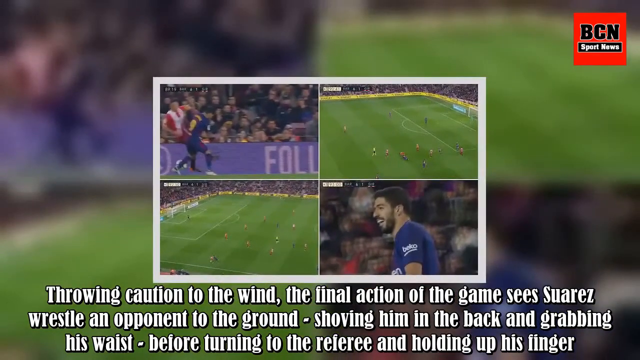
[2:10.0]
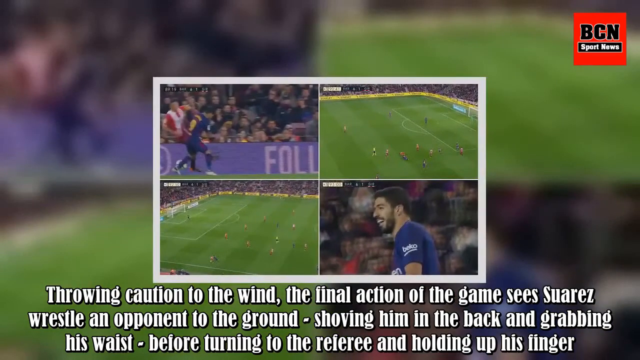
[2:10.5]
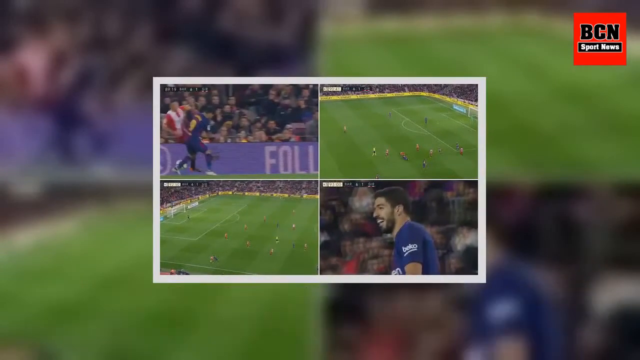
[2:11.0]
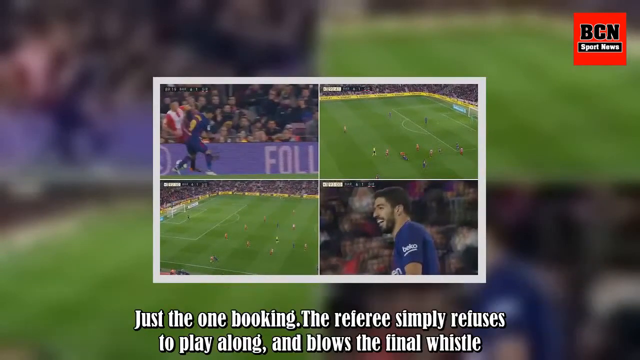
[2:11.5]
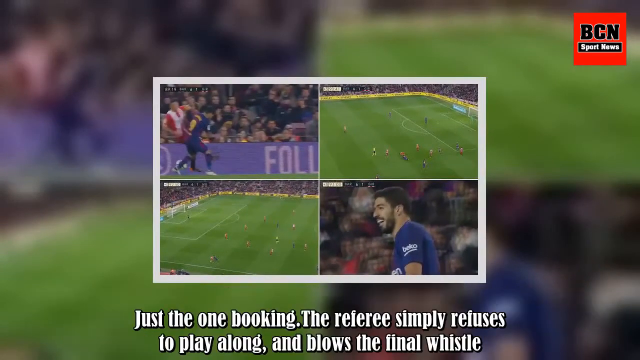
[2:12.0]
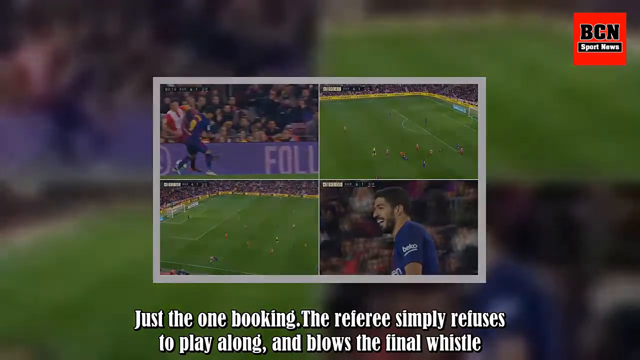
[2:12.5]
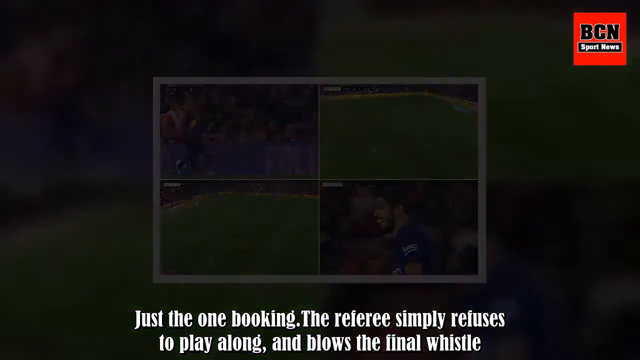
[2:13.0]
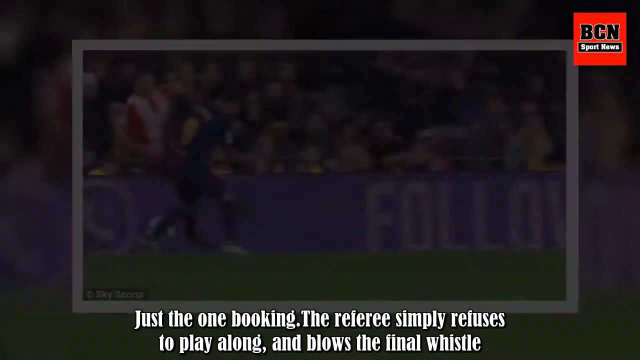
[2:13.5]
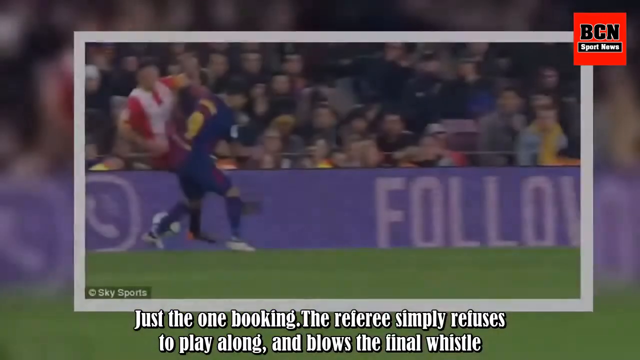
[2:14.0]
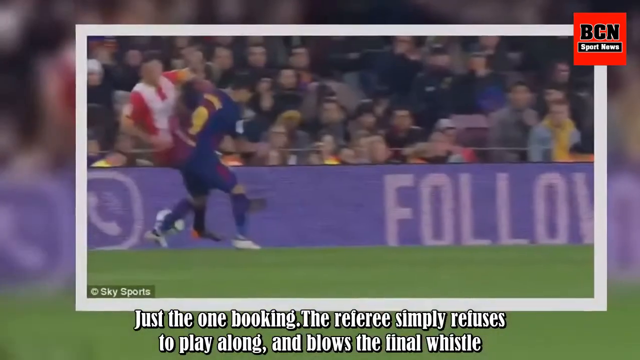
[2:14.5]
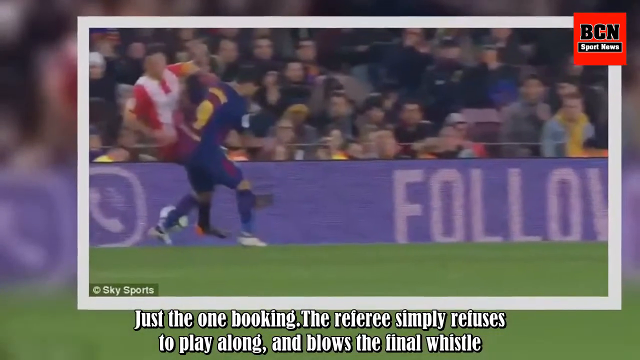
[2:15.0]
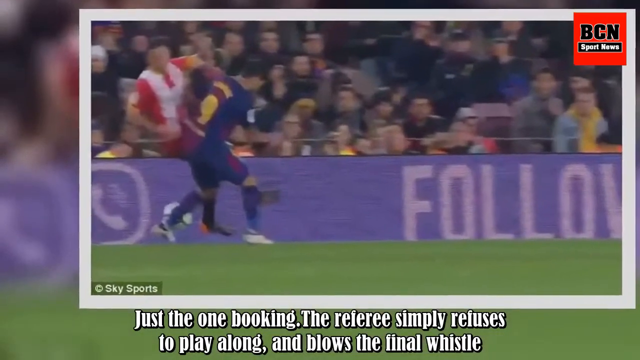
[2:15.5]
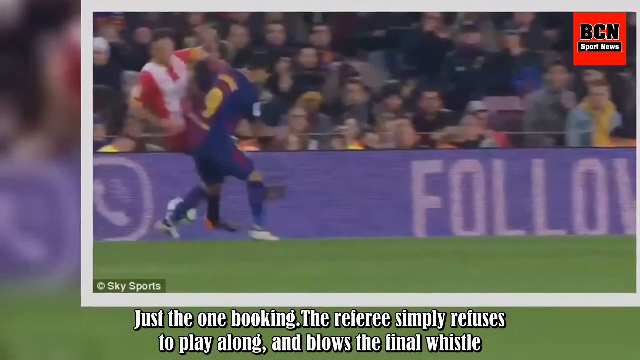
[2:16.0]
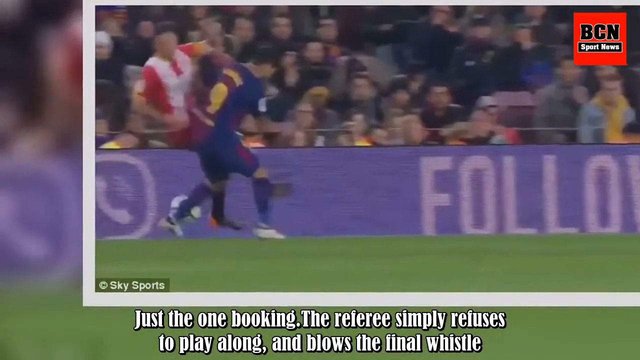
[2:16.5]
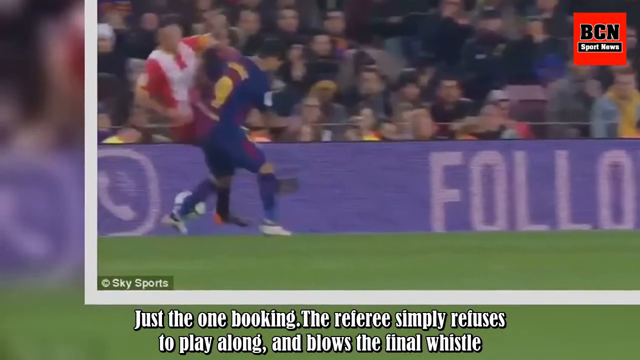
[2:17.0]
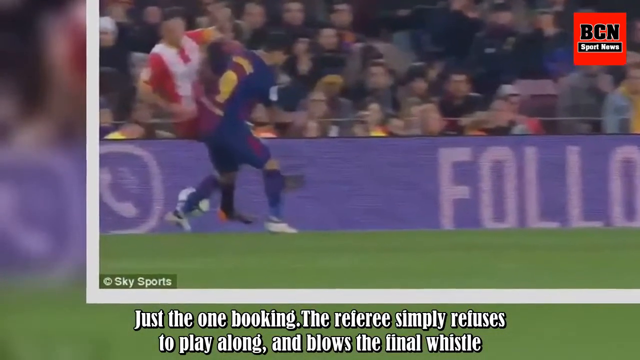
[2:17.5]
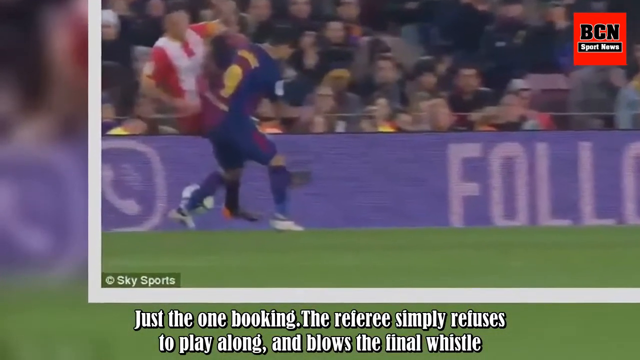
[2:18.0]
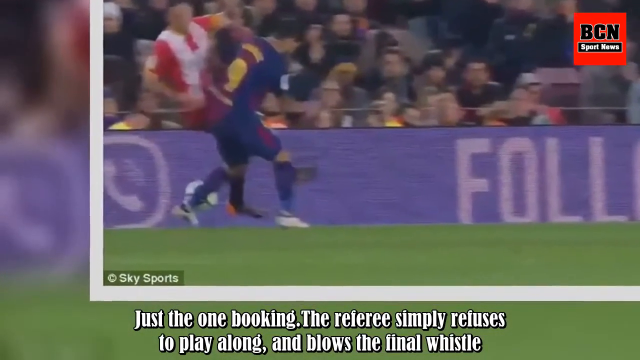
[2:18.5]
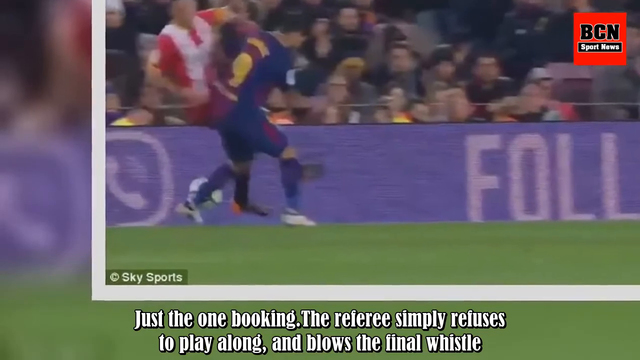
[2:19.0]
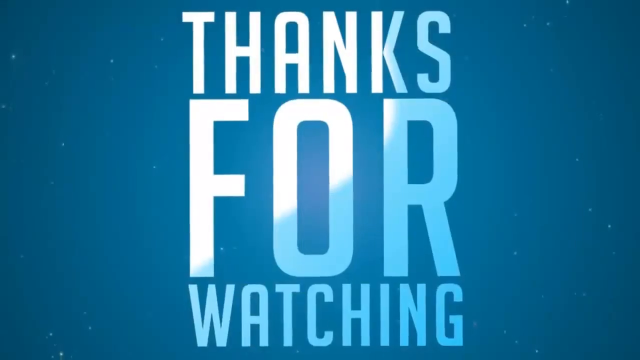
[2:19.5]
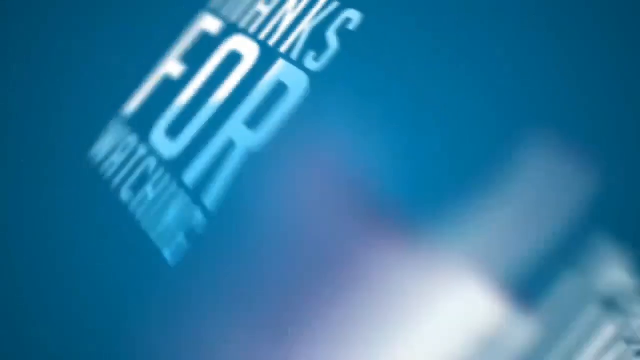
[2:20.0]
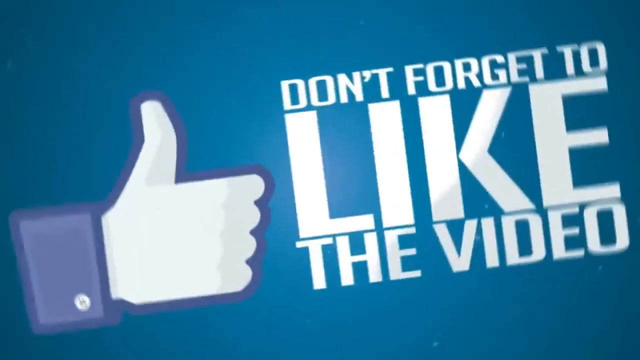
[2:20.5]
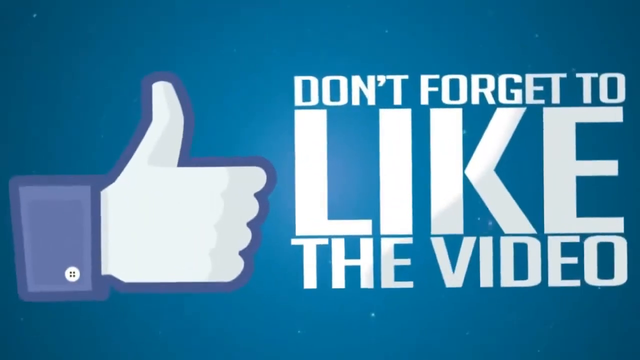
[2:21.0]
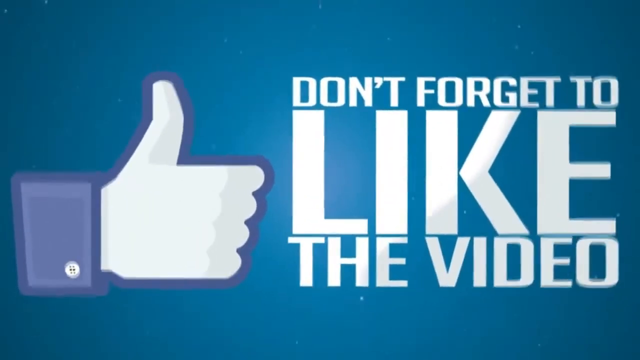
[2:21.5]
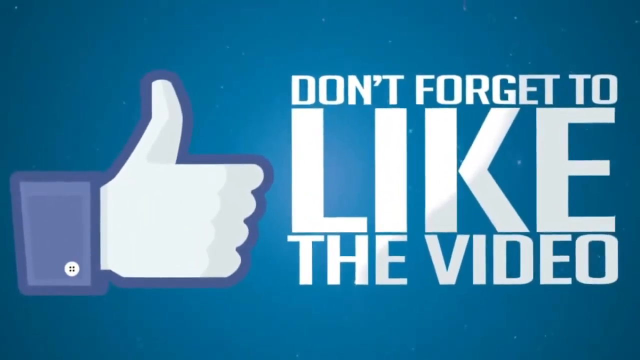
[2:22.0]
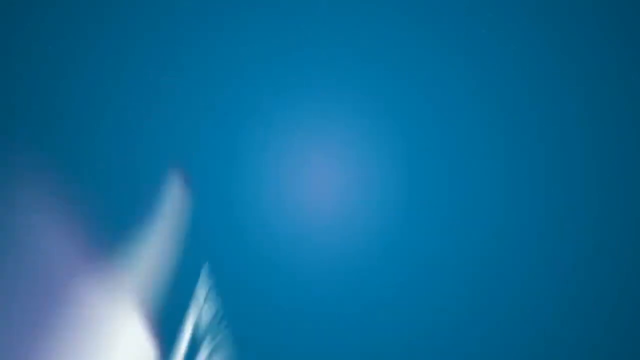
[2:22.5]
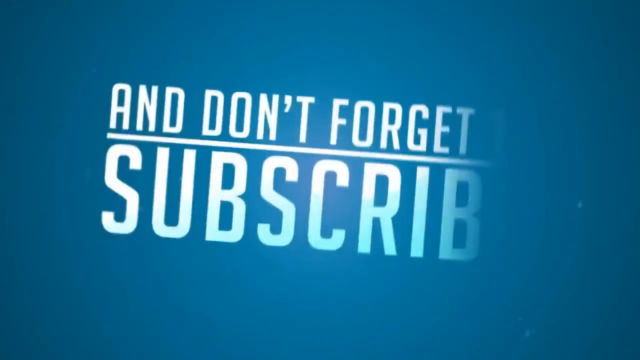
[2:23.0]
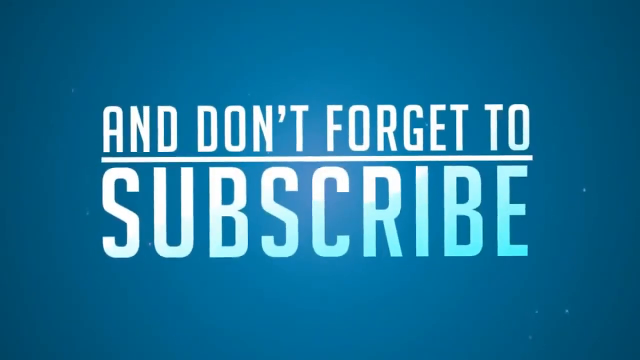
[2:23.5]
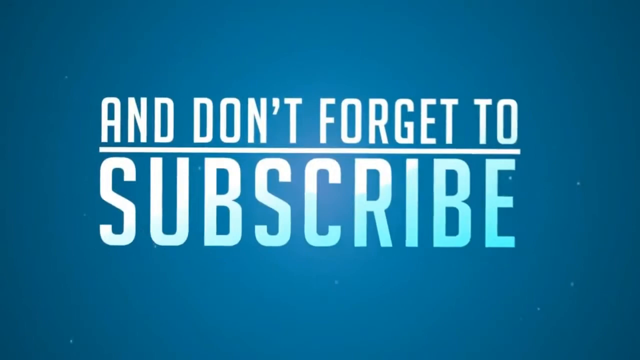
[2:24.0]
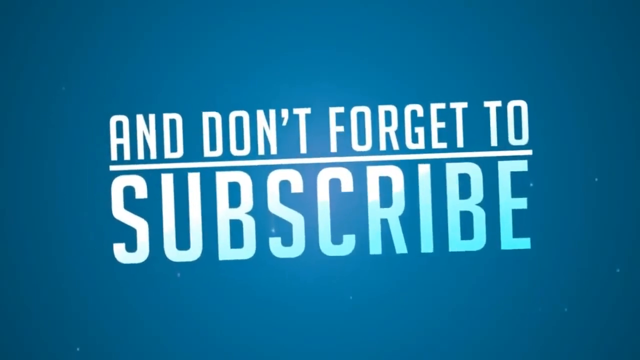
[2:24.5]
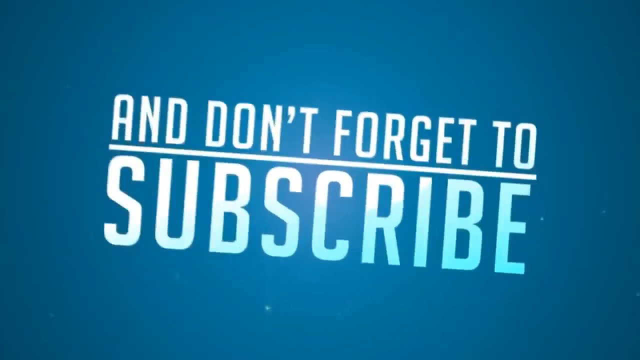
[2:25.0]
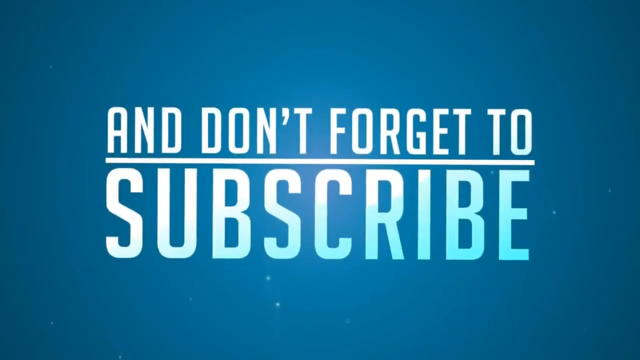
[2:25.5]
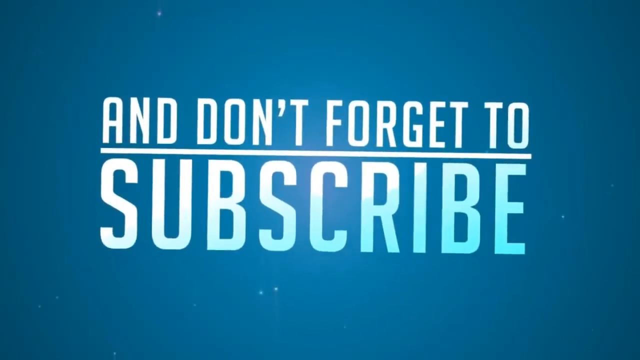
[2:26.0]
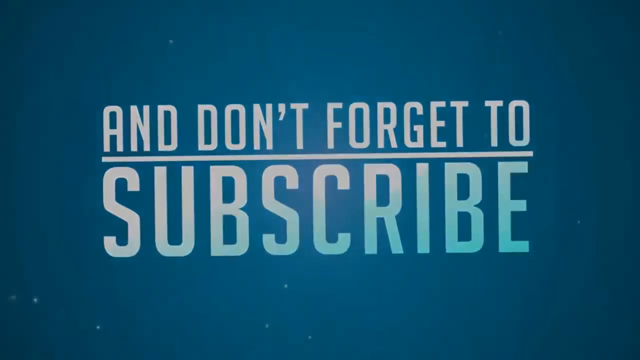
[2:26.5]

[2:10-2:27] Four pictures are collaged together: one shows a player smiling, one shows two players, and two look like aerial views of the soccer game. Below the collage, text reads "the final action of the game sees Suarez wrestle an opponent to the ground, shoving him in the back and grabbing his waist before turning to the referee and holding up his finger." Text then reads "just one booking, the referee simply refuses to play along and blows the final whistle." The view zooms in on the collision of the two players. At the end, the text reads "thanks for watching. Don't forget to like the video with a thumbs up" and "don't forget to subscribe."